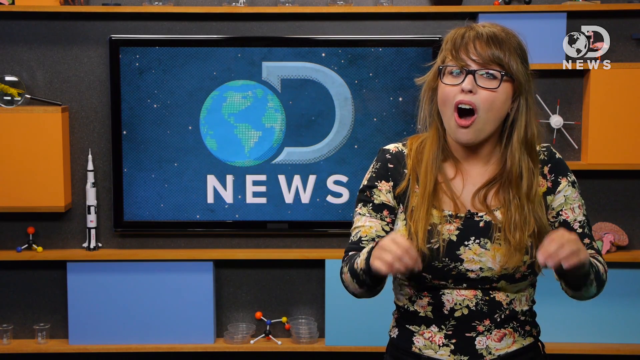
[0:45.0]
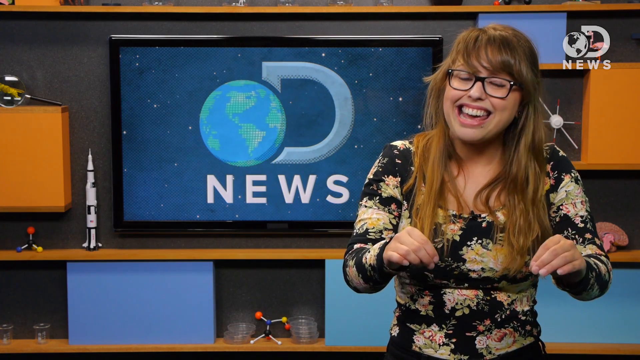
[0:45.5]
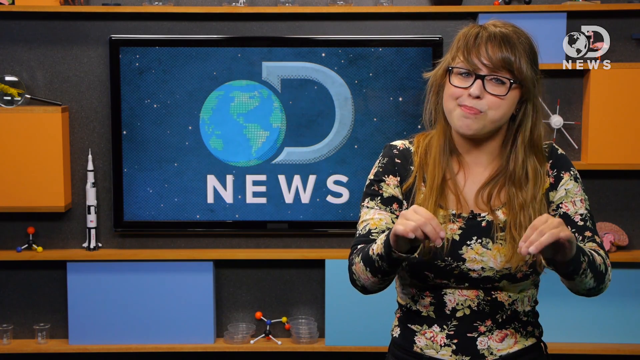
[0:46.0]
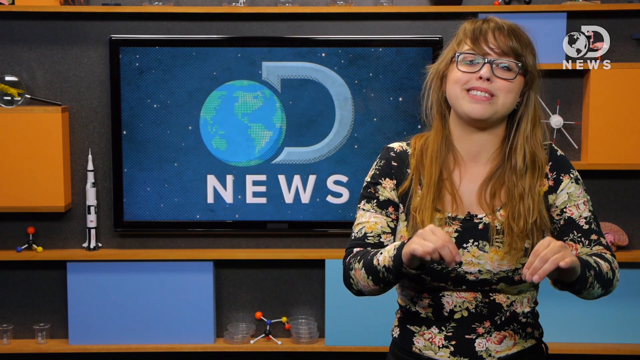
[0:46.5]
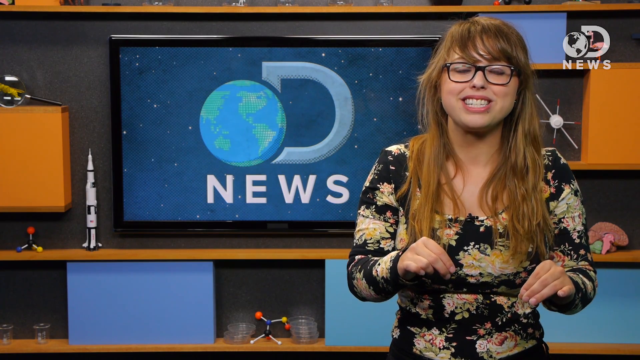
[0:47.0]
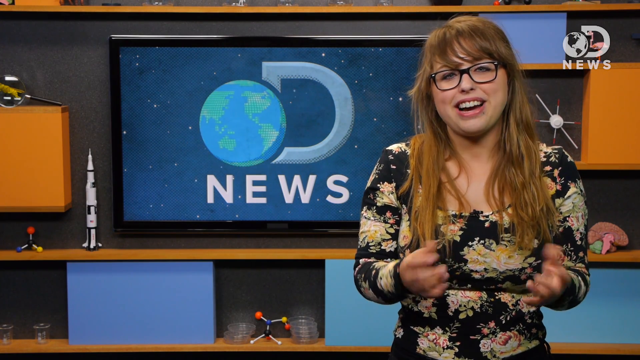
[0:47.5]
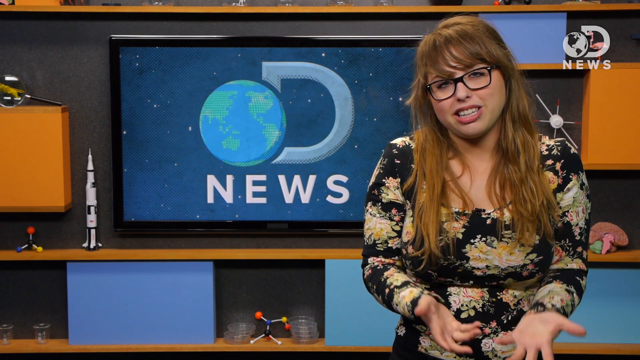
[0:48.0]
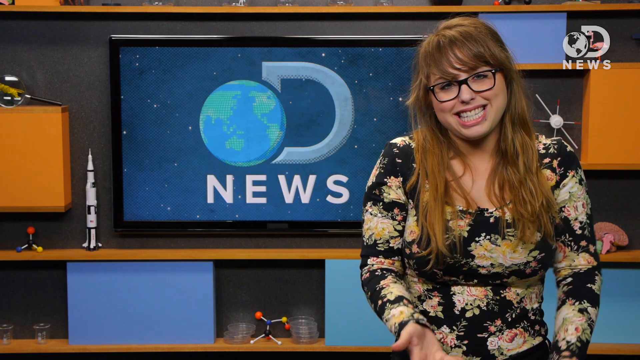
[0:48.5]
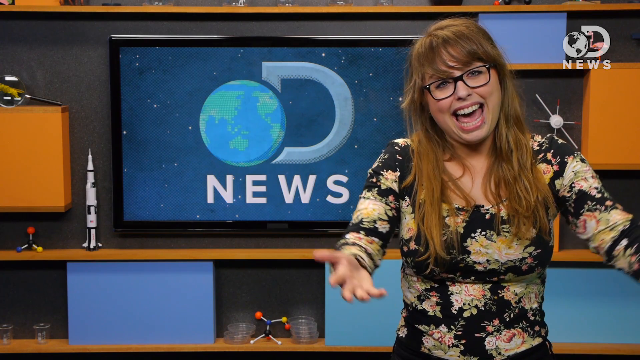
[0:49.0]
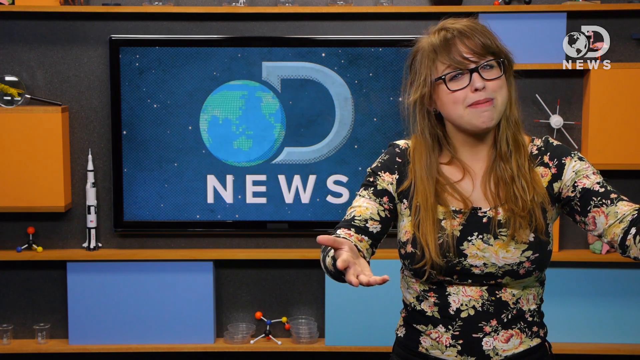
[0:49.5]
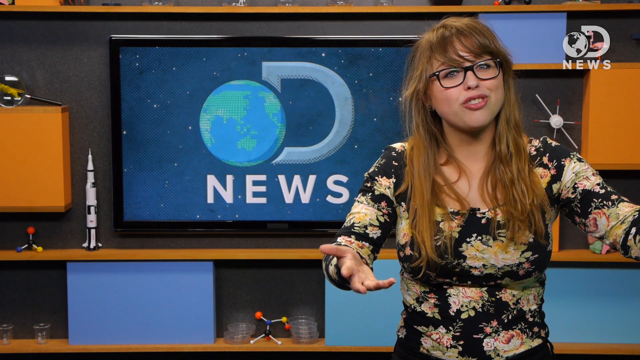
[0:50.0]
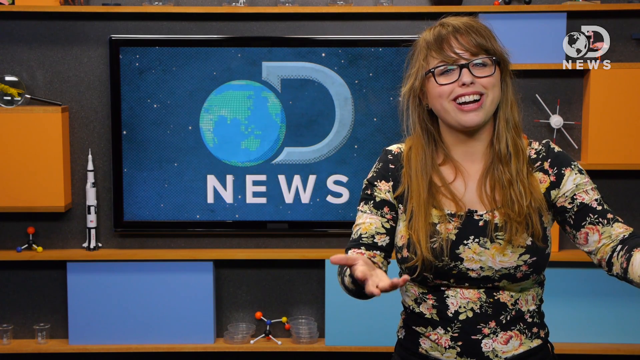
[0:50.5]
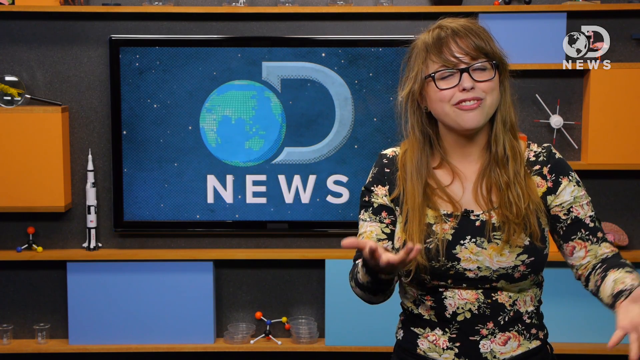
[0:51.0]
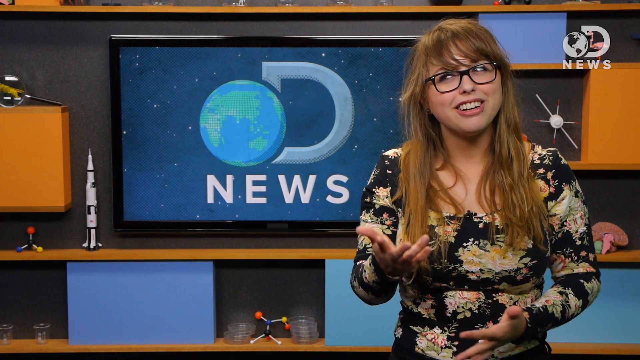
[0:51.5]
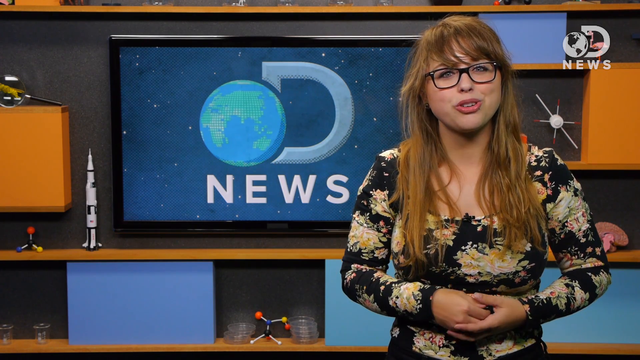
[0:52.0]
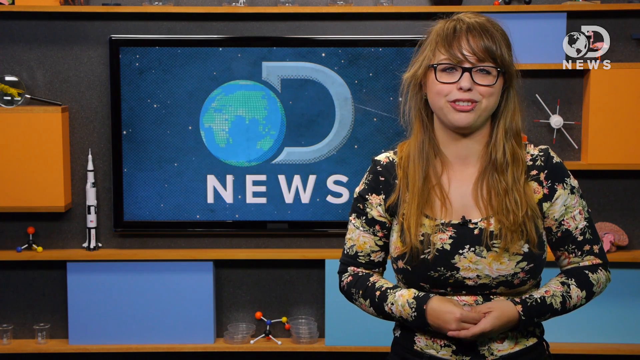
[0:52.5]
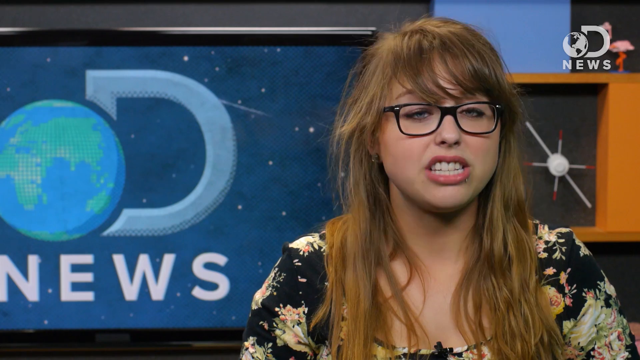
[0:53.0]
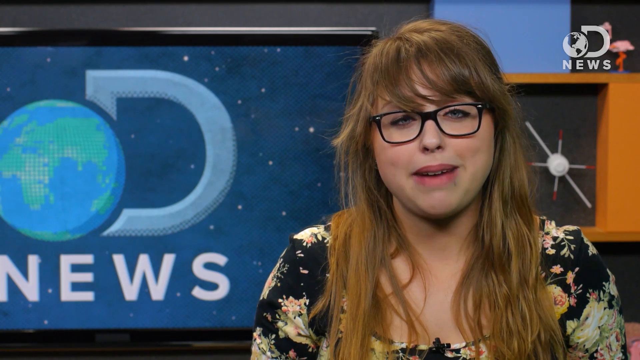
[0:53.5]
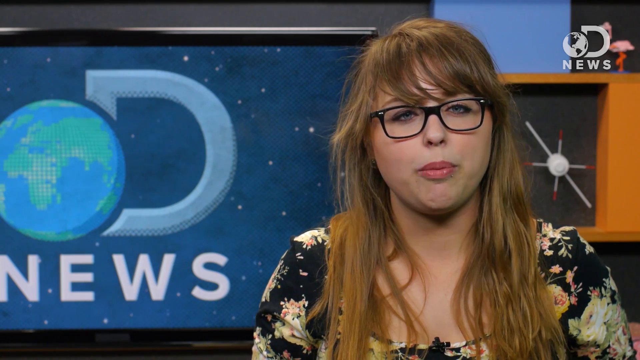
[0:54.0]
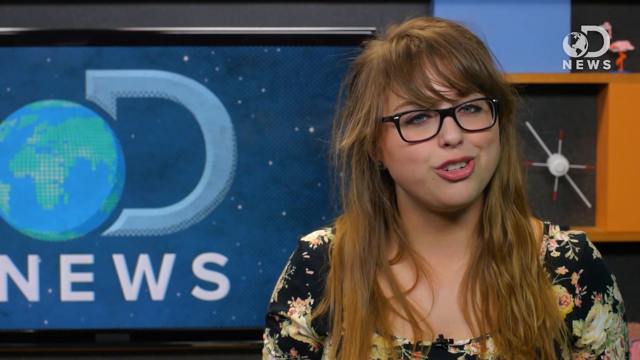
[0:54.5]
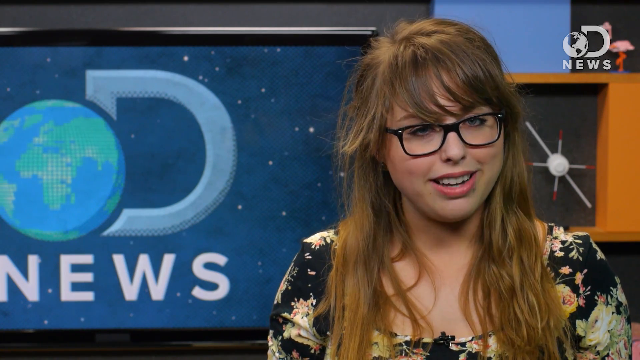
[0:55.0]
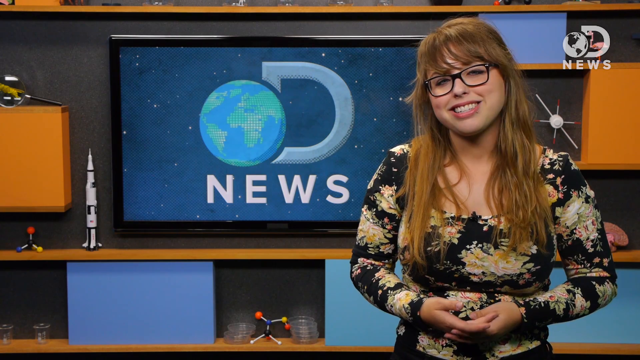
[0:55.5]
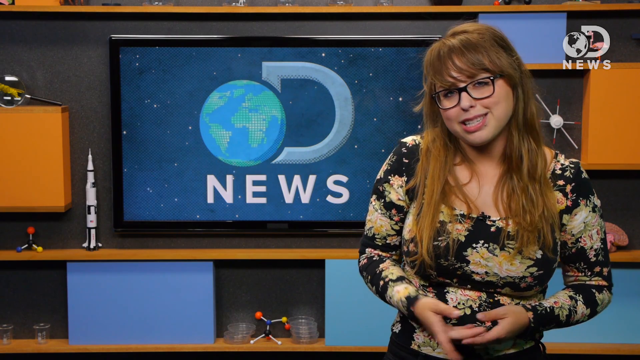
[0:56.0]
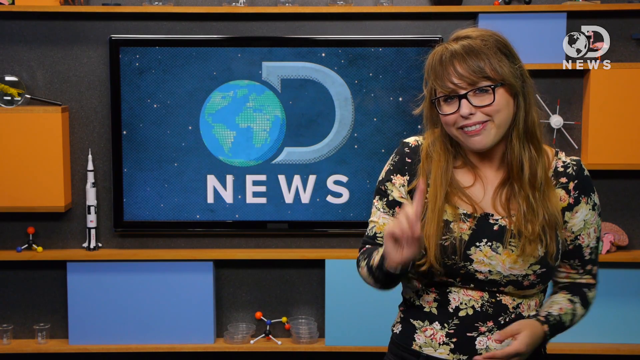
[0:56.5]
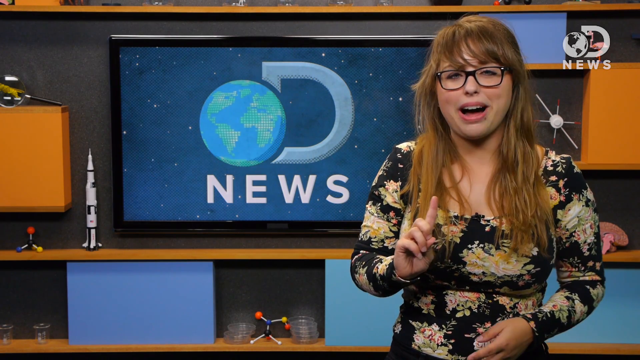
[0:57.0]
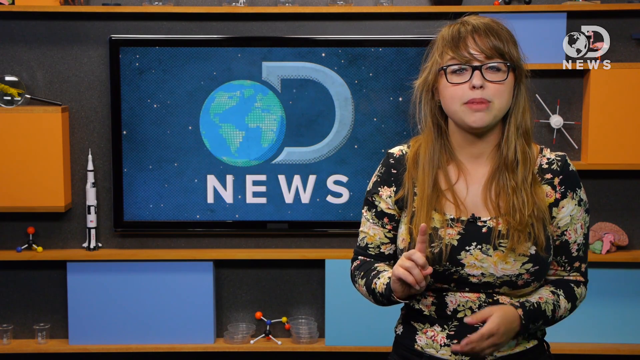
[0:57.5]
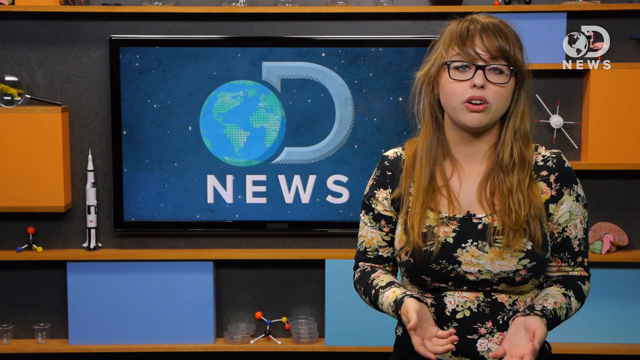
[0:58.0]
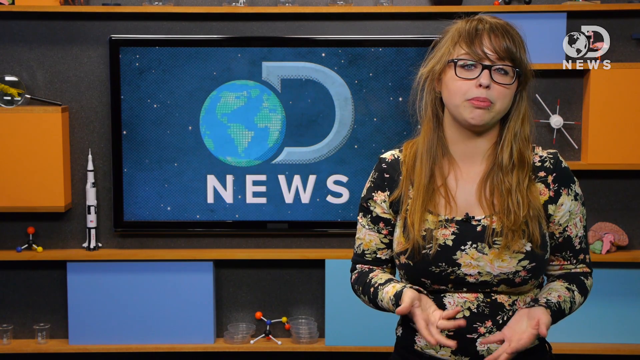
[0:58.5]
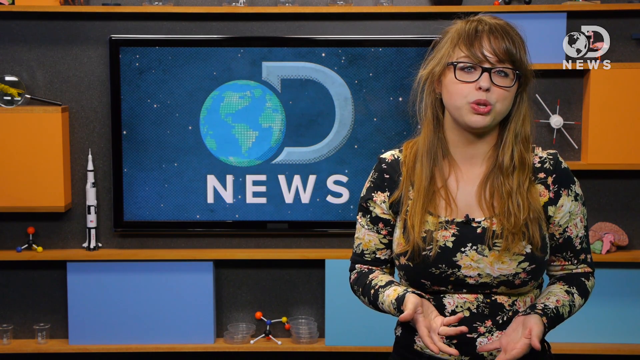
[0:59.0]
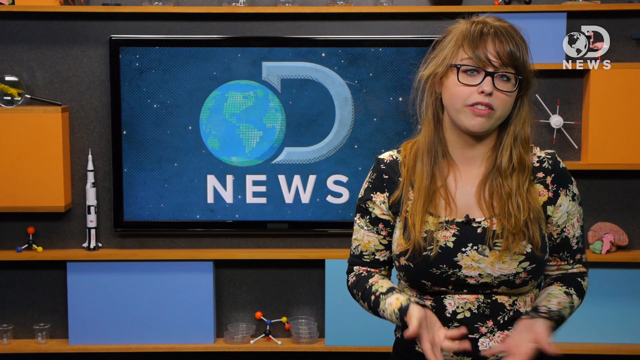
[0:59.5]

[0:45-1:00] A woman talks to the camera while making hand motions in front of her. She wears black glasses, has a white skin tone and orange-ish brown hair down to her chest, and wears a black dress with flowers that appear to be white. Behind her is a television showing the letter D with the earth next to it and the word "news" under that. Around the television are several orange and blue block shapes and several toys: a spaceship to the left of the television, a DNA strand to the left of that, and an earth at the very bottom right, to the right of the woman, on one of the shelves. Close-ups show the woman talking, making a lot of hand motions; she is very enthusiastic. The bottom shelves are mainly blue: the bottom left shelf is a darker blue, while at the bottom right are two sky-blue boxes. In the middle there is an orange box, and at the top right a small pink flamingo toy is on one of the orange shelves. The television has what appears to be a plastic square shape around it.